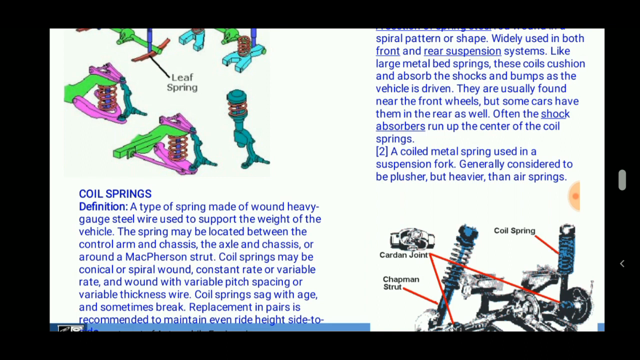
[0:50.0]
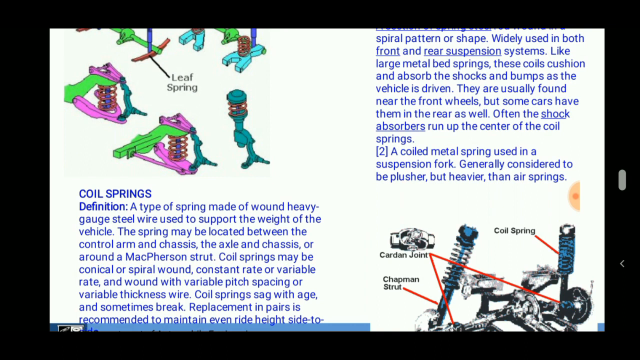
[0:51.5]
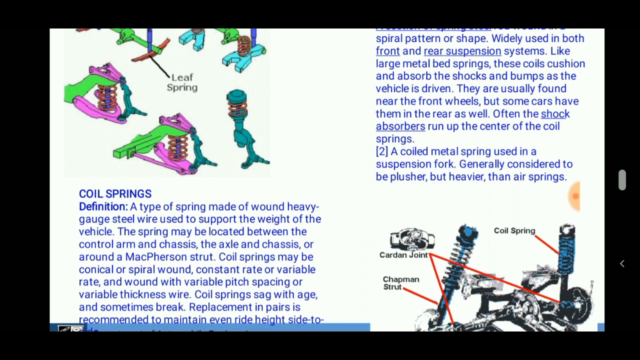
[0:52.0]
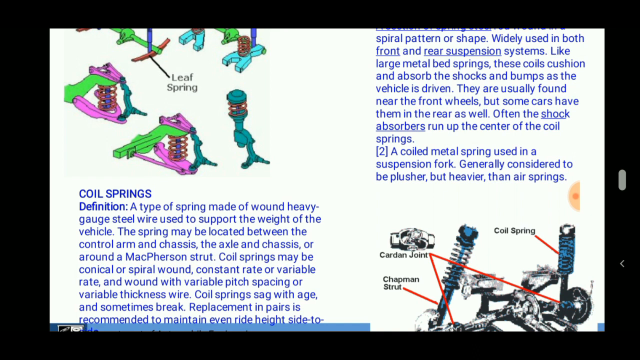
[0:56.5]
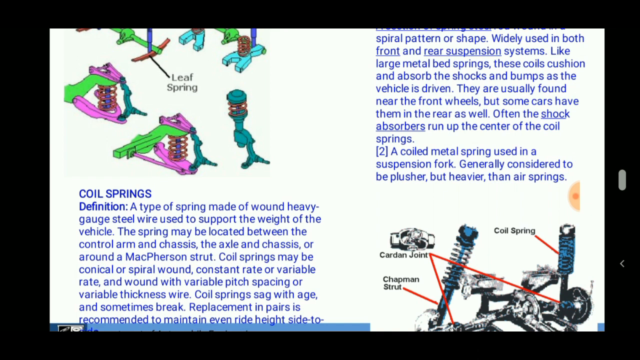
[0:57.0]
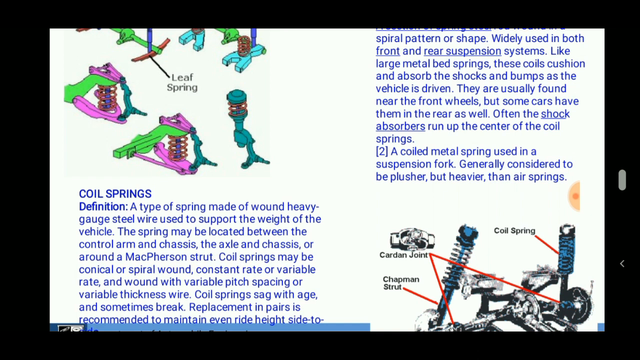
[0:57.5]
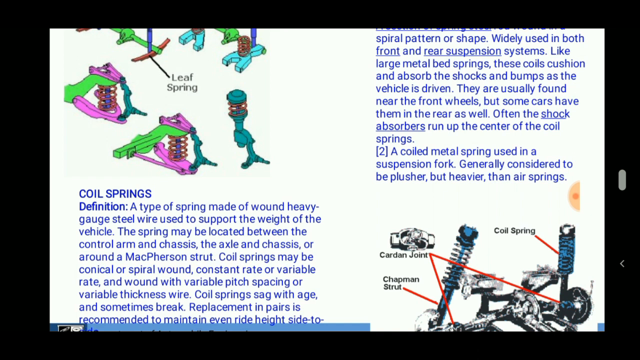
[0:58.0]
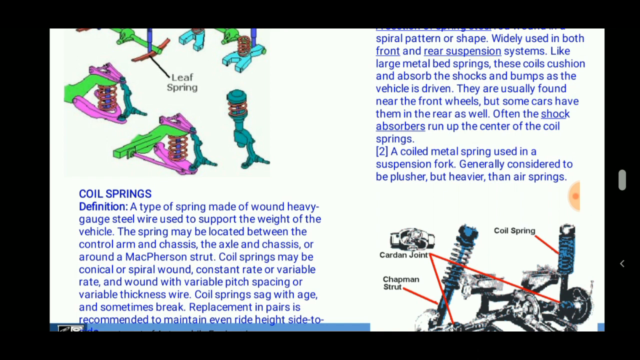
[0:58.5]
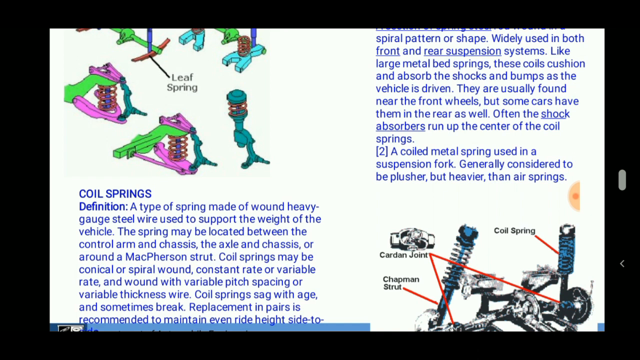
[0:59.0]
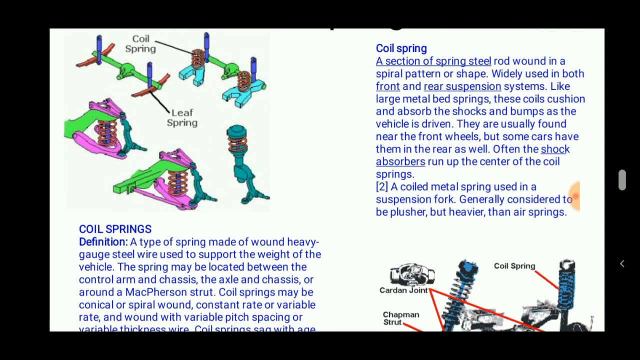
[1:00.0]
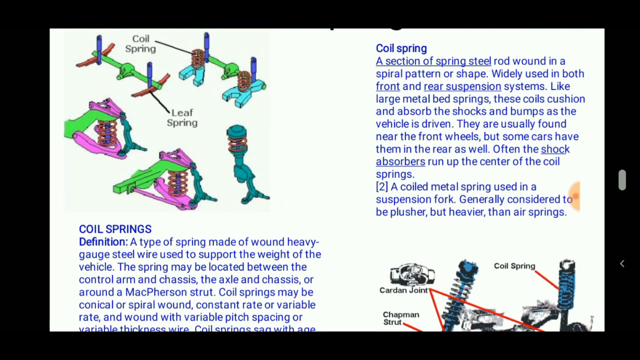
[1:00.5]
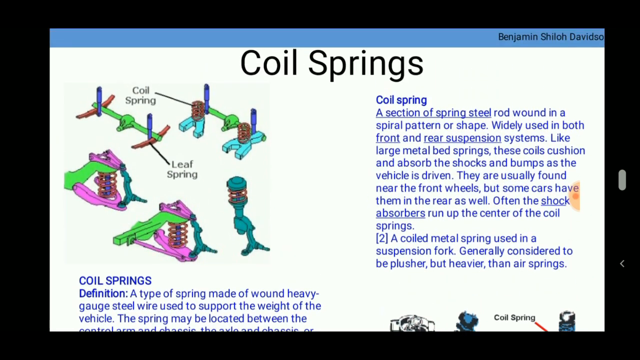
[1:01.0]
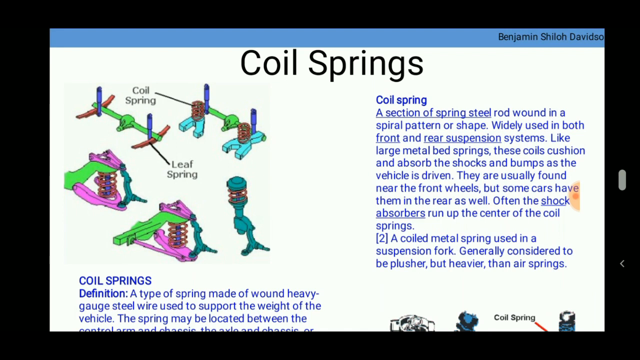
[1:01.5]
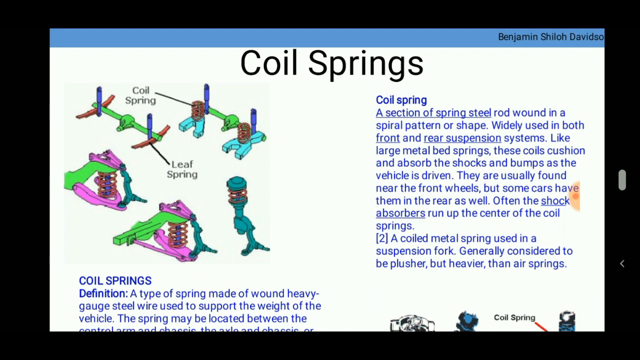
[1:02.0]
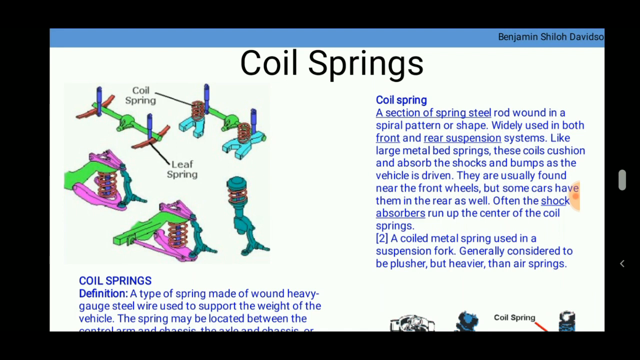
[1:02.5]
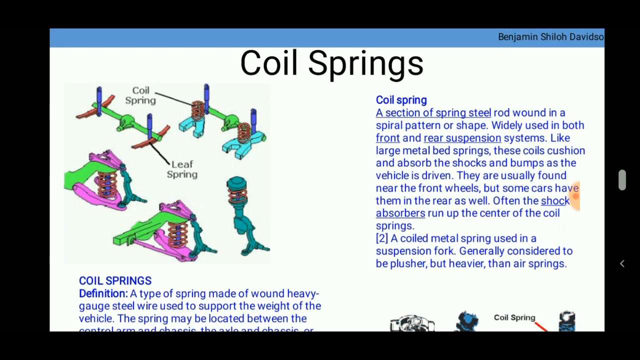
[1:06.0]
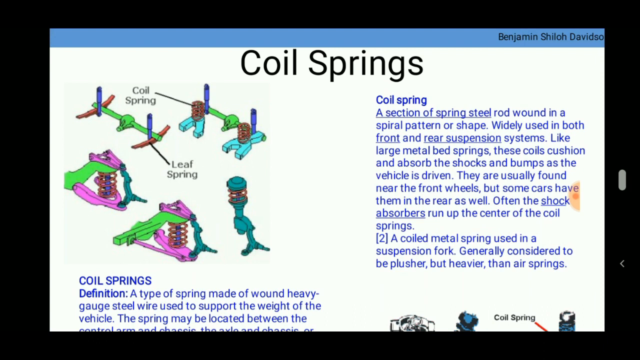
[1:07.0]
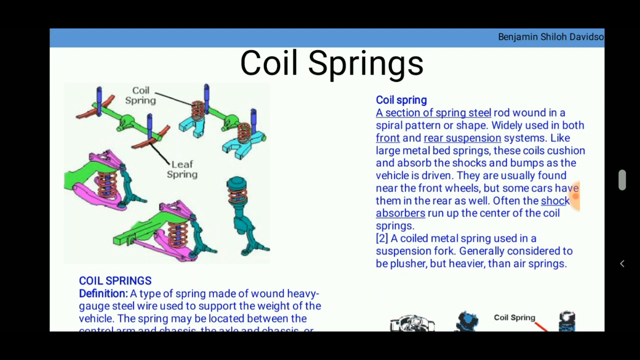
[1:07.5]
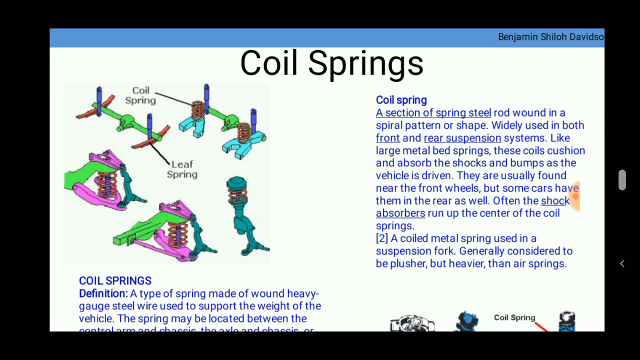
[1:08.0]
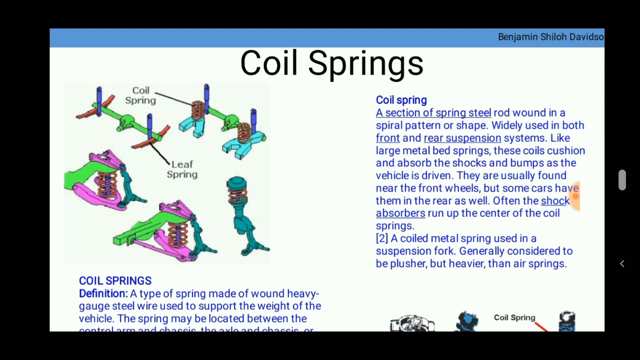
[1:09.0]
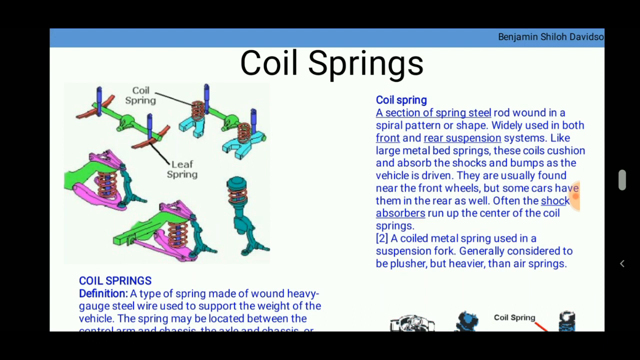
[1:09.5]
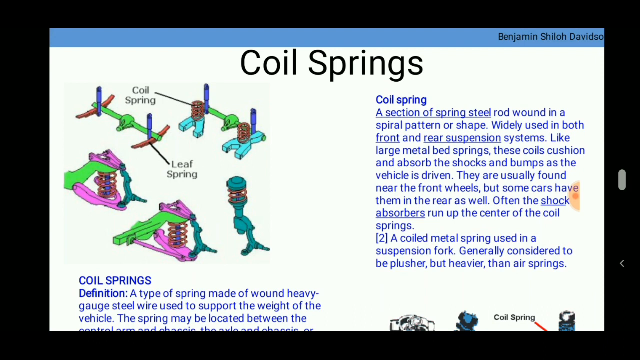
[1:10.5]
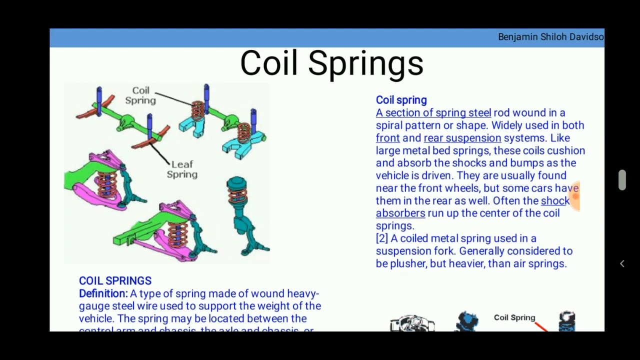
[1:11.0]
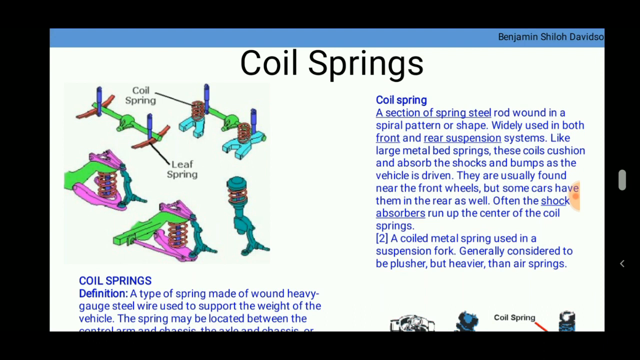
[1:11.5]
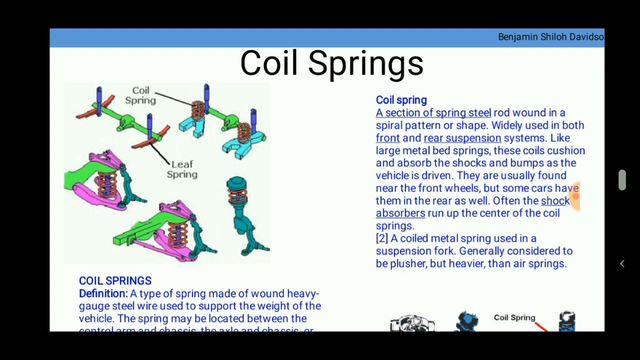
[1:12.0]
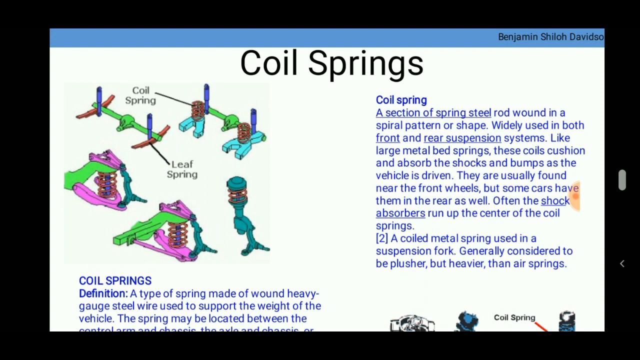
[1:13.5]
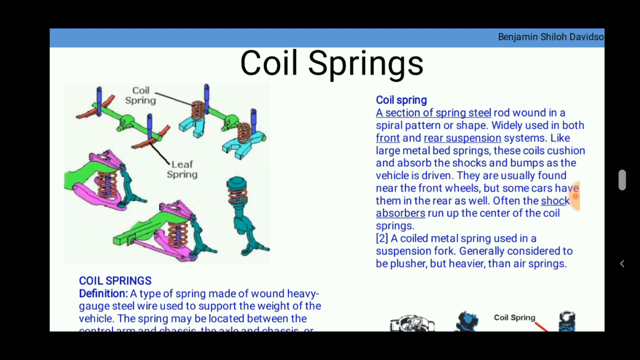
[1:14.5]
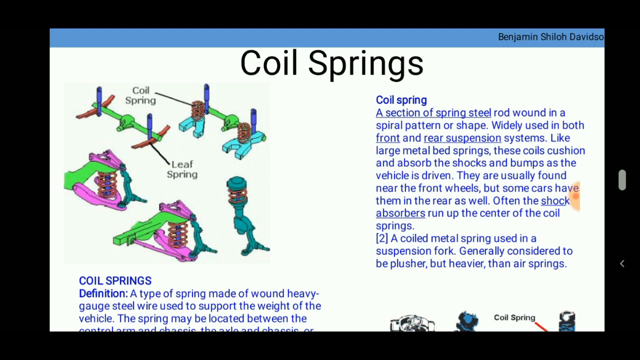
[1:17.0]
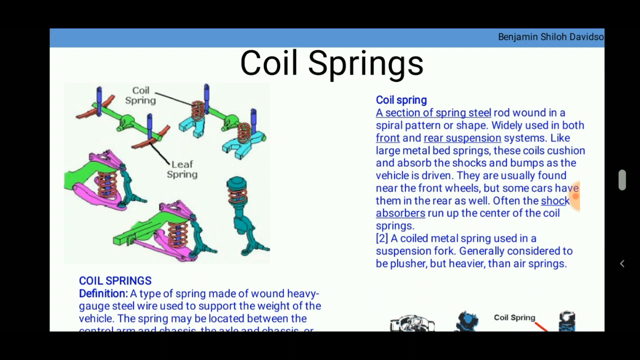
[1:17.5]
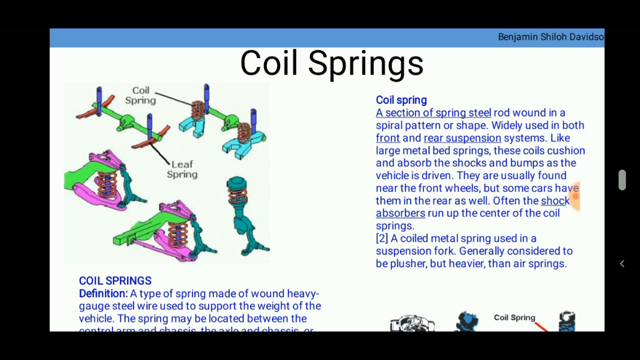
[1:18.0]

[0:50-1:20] The owner of the channel is named as Benjamin Schiller David Storm. The coil spring definition is shown: "a type of spring made of wound heavy gauge steel wire used to support the weight of the vehicle", which may be located between the control arm and chassis or the axle and chassis. The text adds that coil springs may be conical or spiral wound, constant rate or variable rate, and wound with variable pitch spacing or variable thickness wire. The coil spring description also appears: a section of spring-steel rod wound in a spiral pattern or shape used in both front and rear suspension systems, like large metal bed springs, usually found at the front.